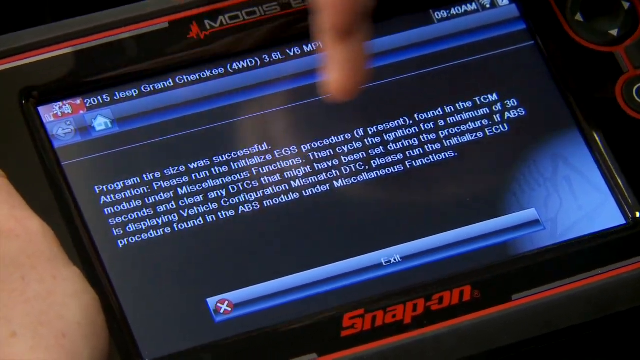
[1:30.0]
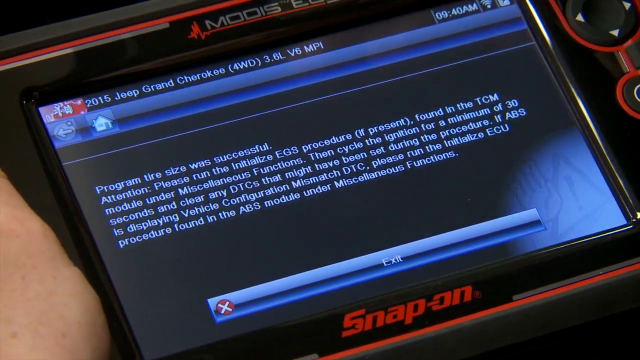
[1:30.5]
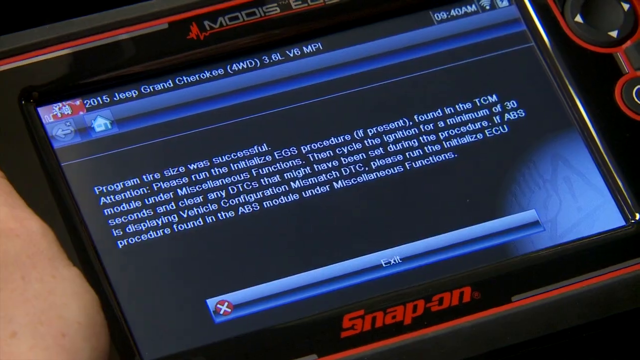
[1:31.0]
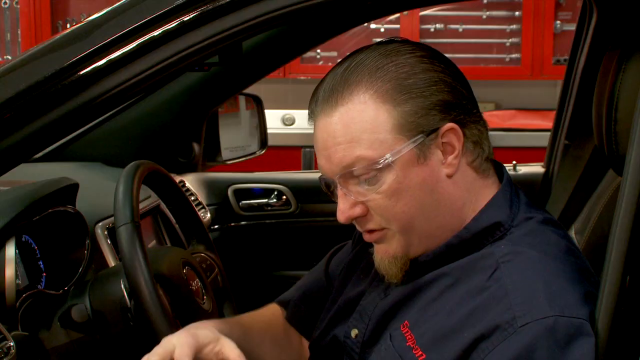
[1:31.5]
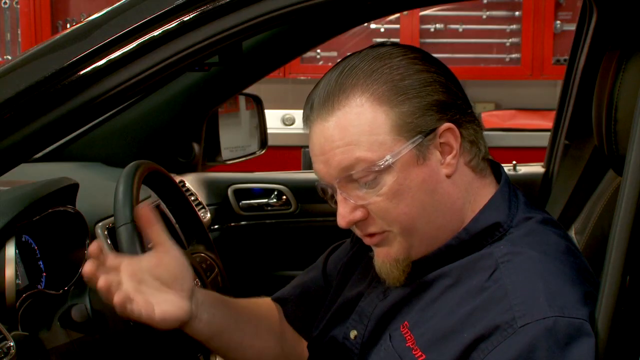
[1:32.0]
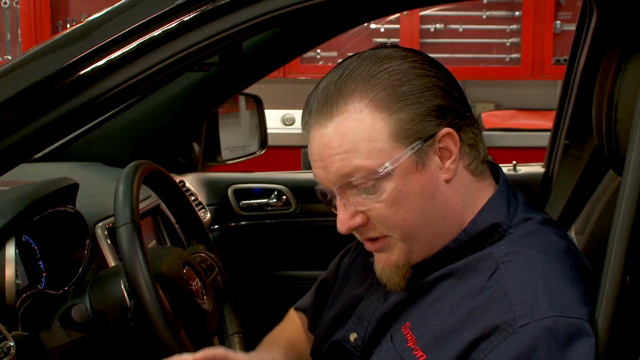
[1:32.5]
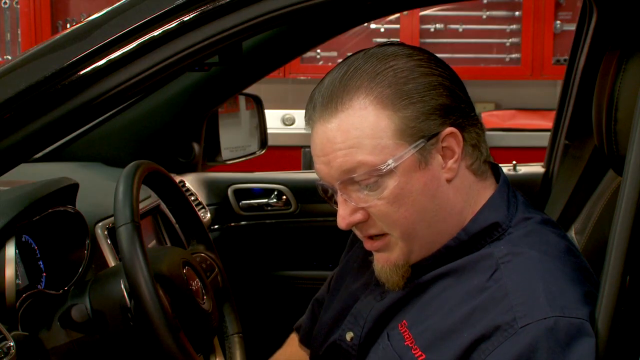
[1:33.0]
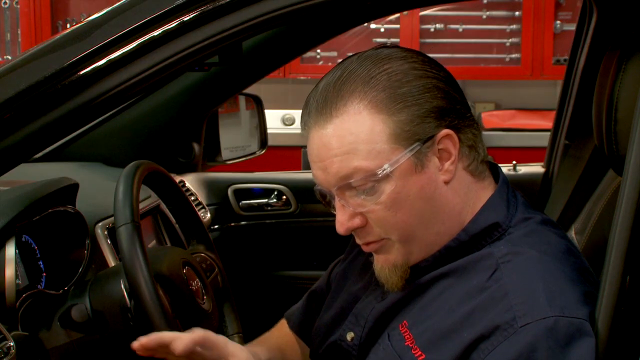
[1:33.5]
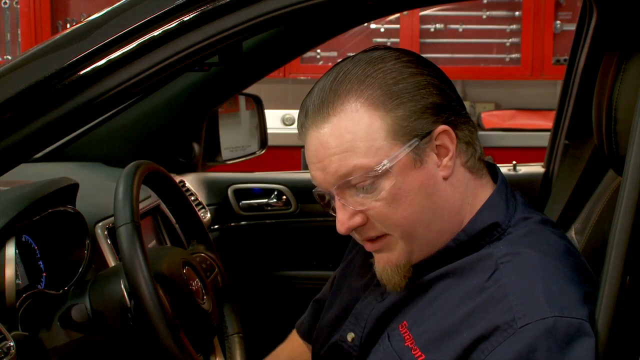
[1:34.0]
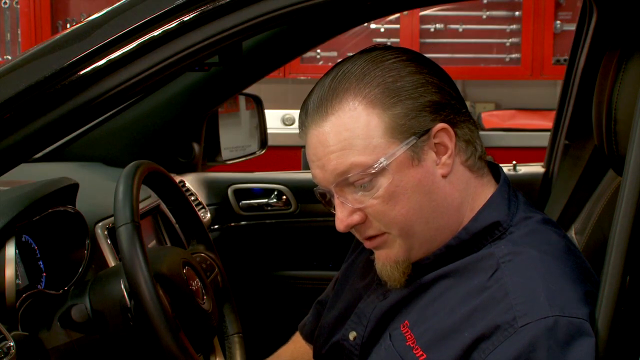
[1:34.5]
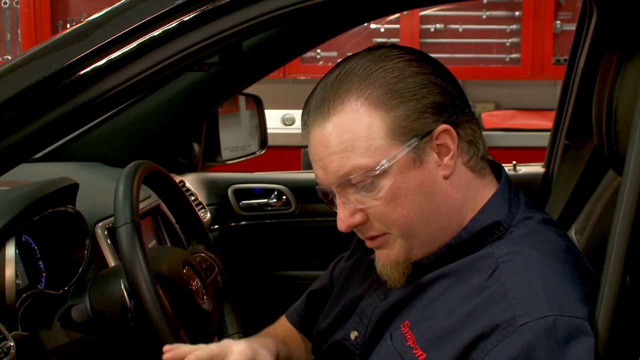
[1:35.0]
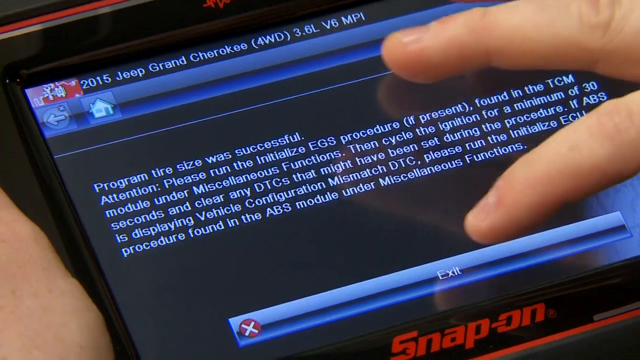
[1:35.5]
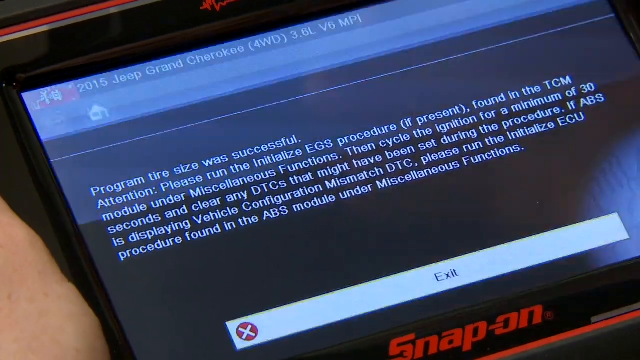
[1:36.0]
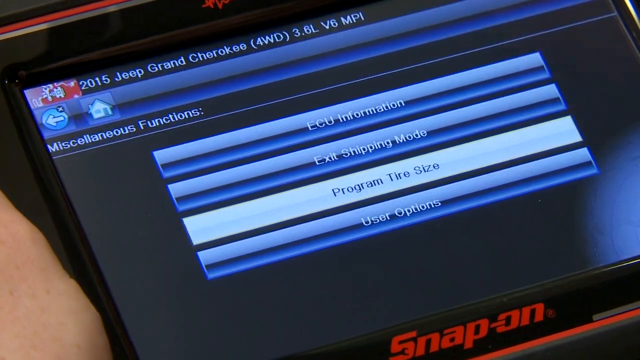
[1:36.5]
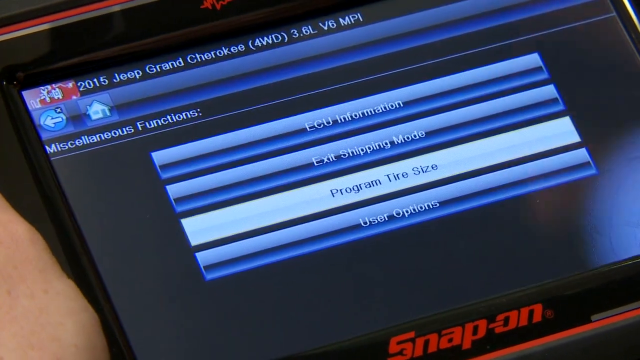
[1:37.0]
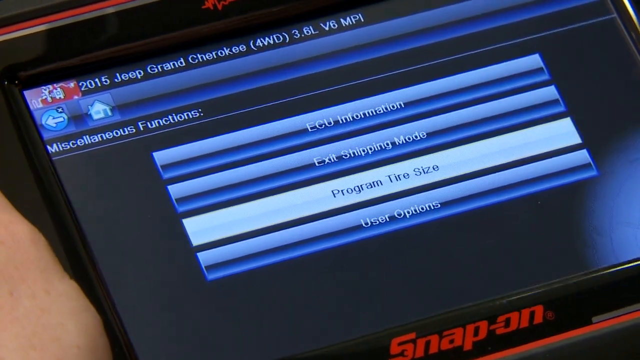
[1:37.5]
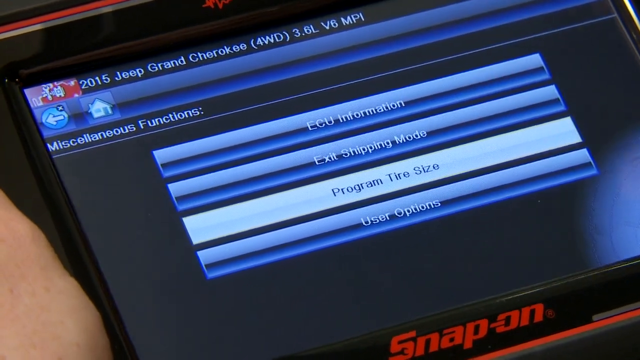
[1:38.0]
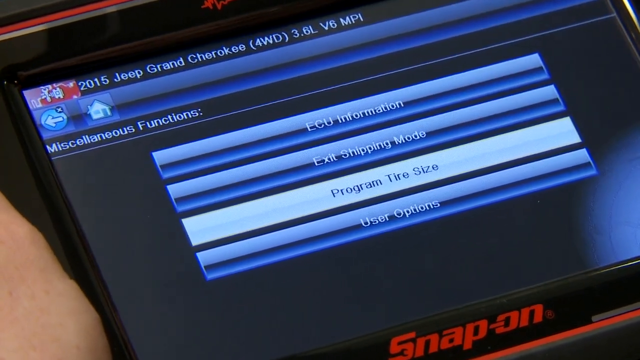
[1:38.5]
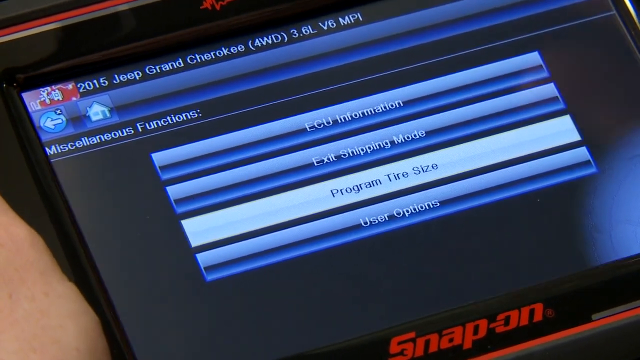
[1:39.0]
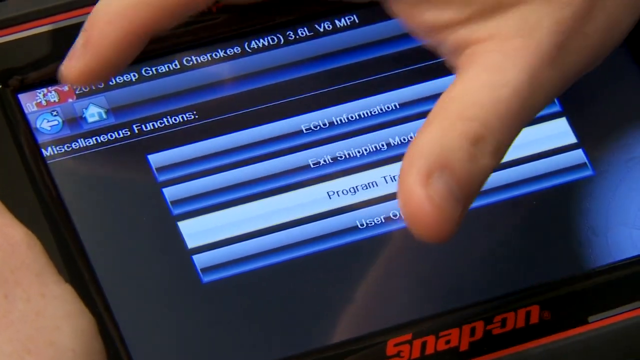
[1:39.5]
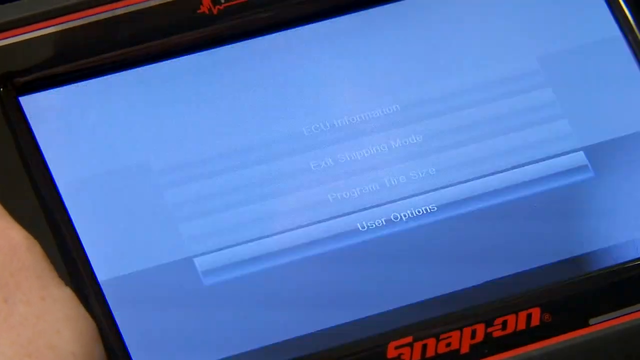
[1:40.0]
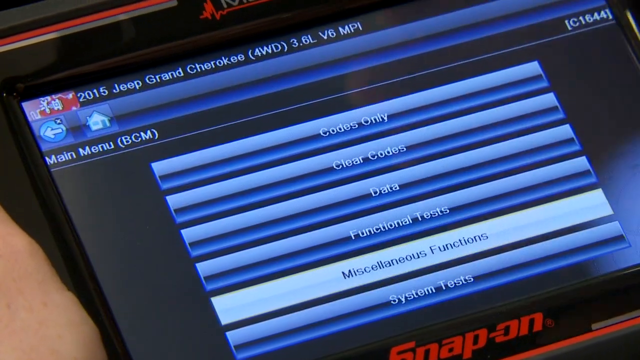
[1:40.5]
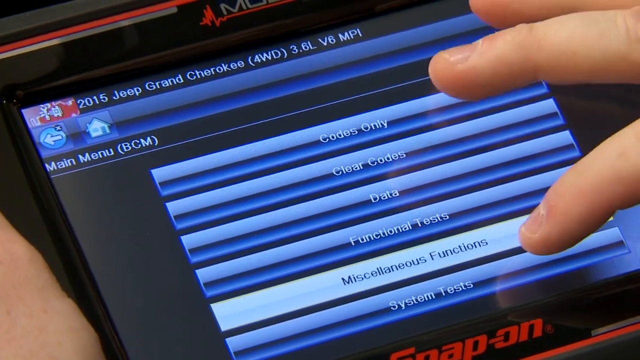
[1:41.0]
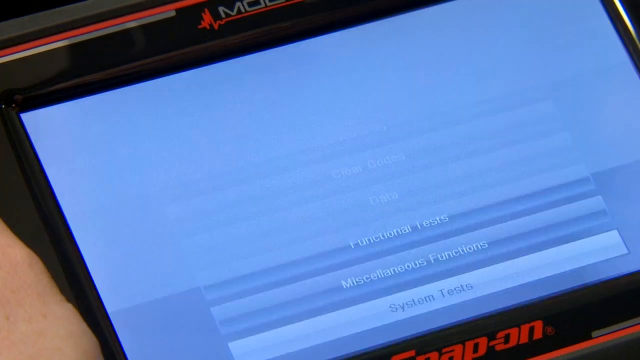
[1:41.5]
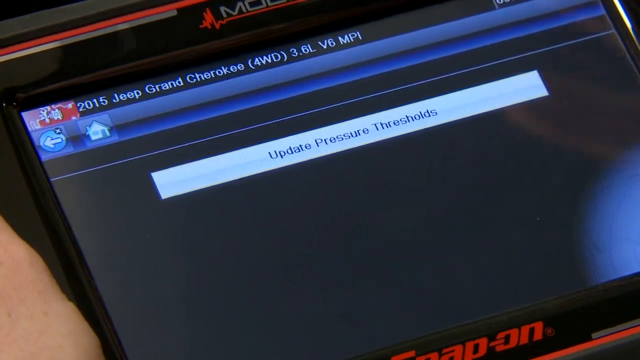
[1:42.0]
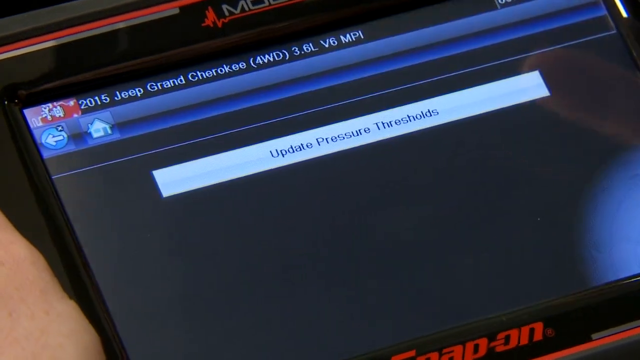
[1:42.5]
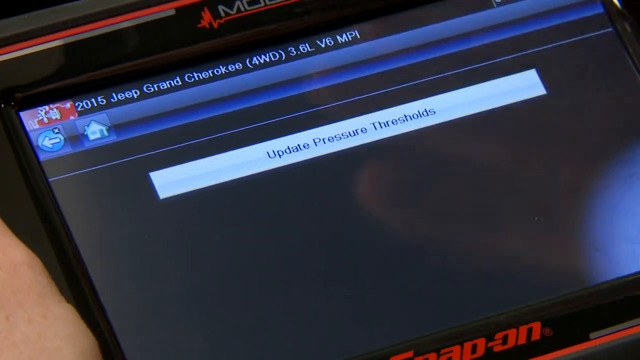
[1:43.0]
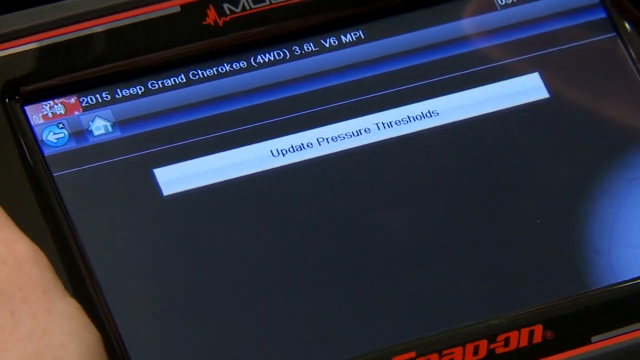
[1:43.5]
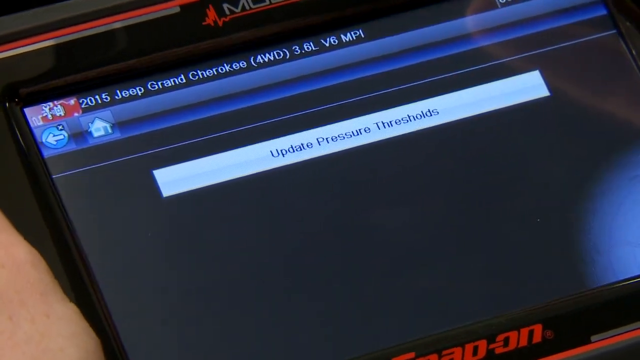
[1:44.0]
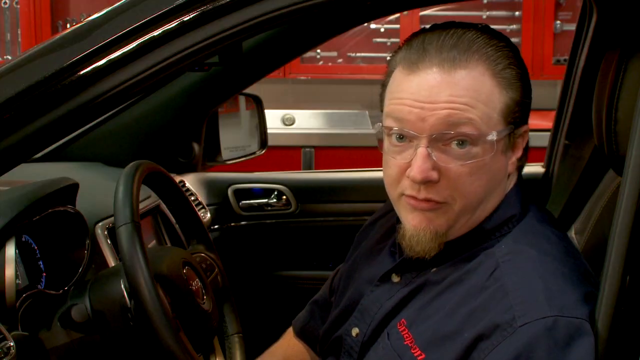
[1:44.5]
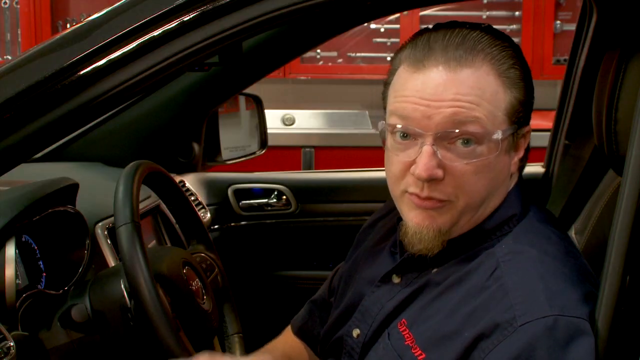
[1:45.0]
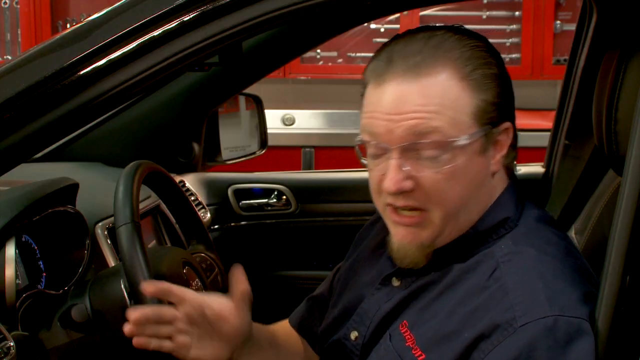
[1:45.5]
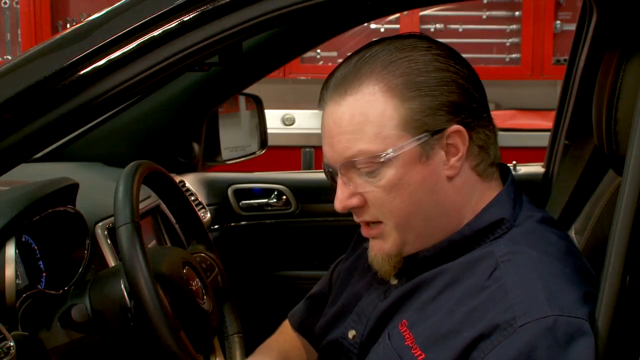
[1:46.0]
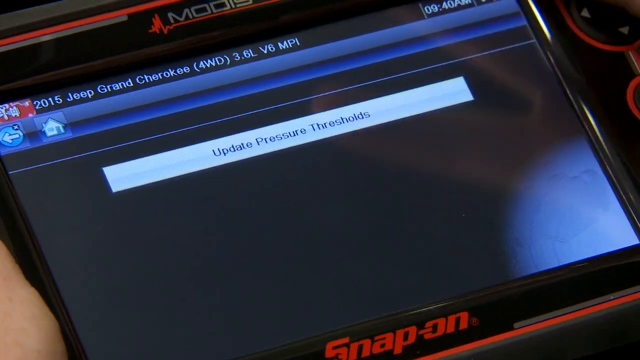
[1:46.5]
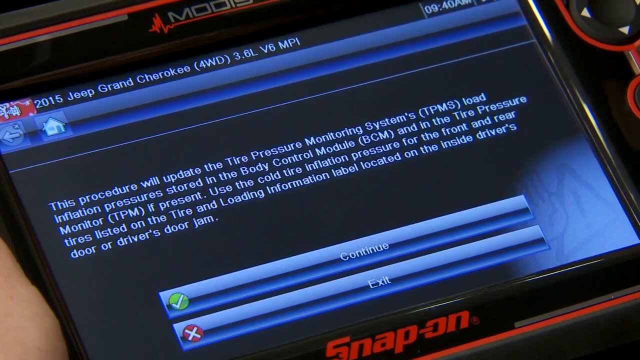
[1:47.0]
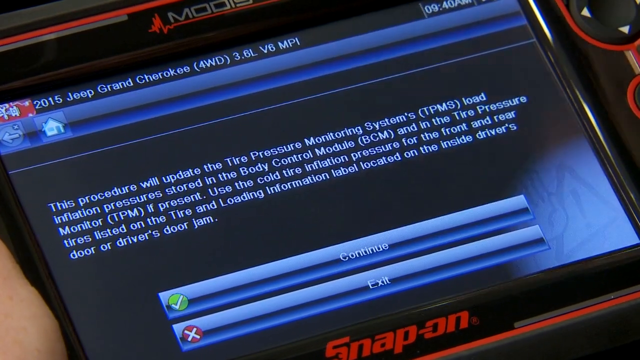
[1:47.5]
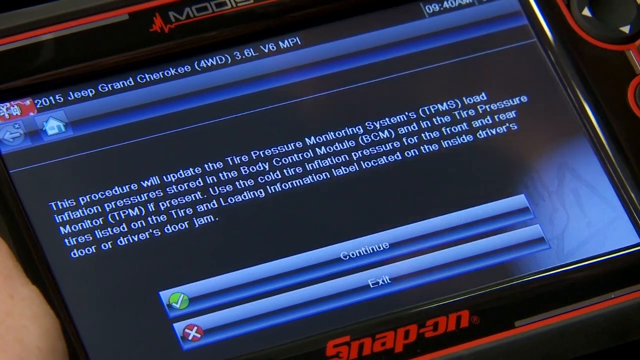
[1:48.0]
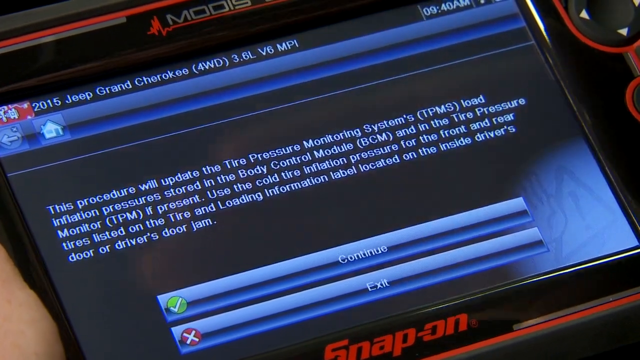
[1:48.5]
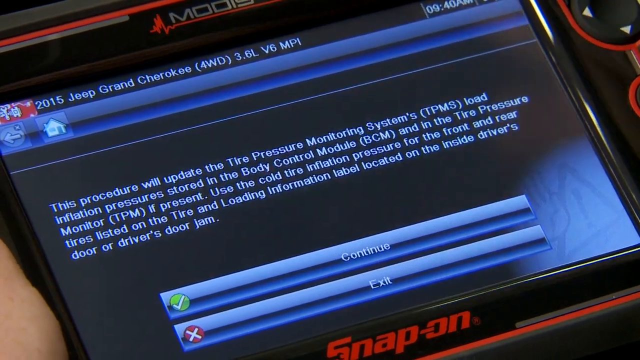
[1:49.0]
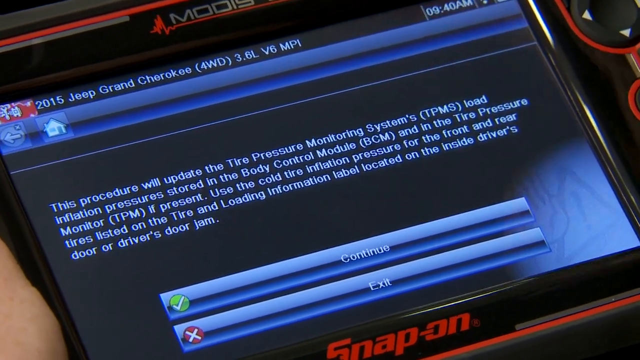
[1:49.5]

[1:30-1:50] The video cuts back to the man presenting, then straight back to the device screen. He taps back and then taps "system tests"; on that menu he taps the option "update pressure thresholds." The video cuts briefly back to the man, then returns to the screen, which shows a warning reading "this procedure will update the tire pressure monitoring systems load inflation pressures stored in the body control module," along with more information. He seems satisfied with it, and the shot ends just before he taps continue.